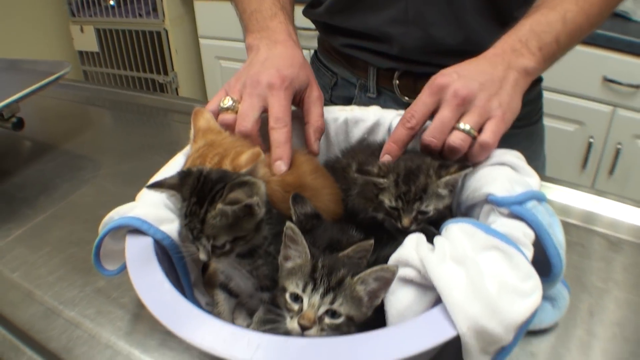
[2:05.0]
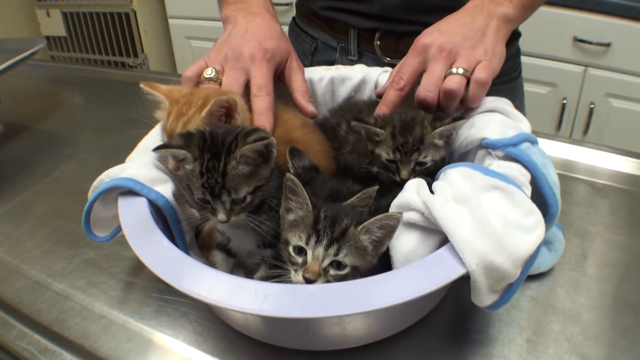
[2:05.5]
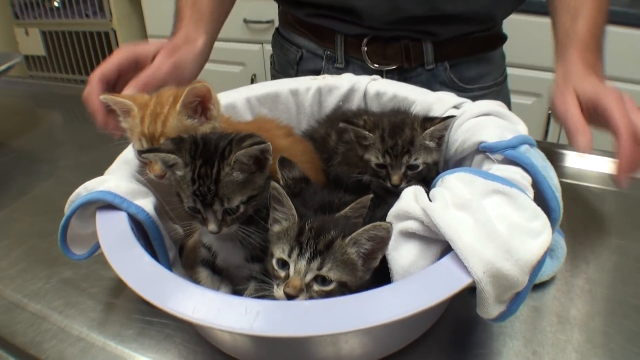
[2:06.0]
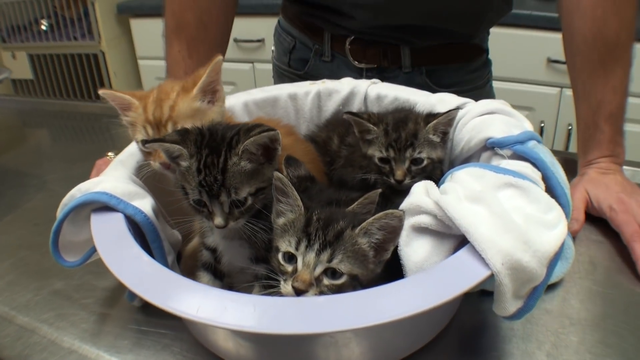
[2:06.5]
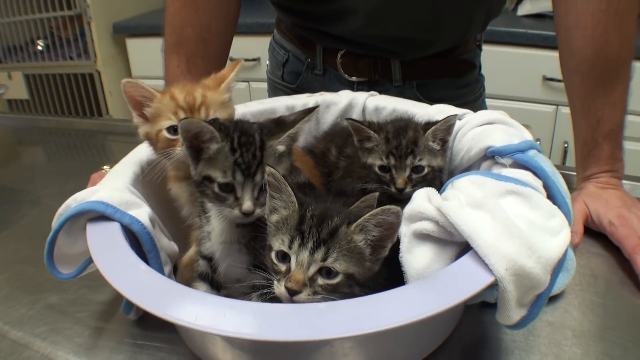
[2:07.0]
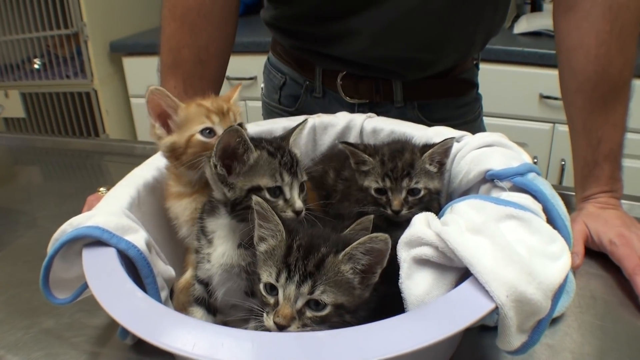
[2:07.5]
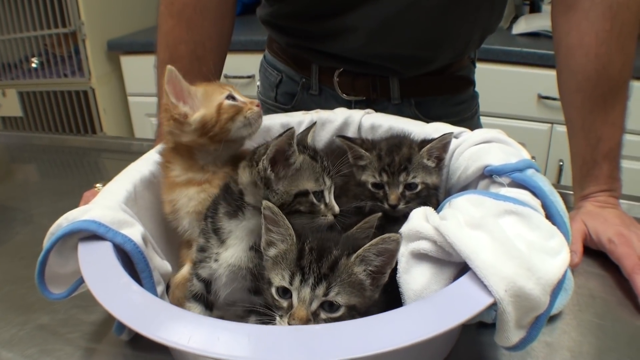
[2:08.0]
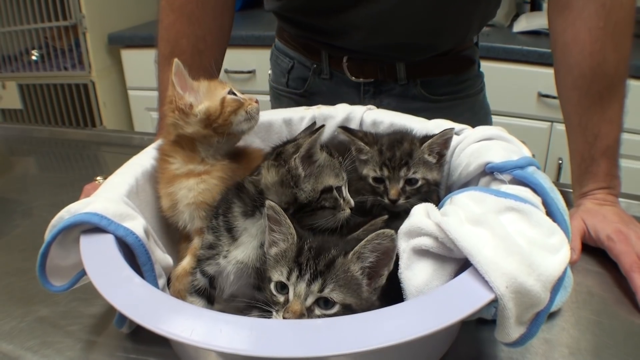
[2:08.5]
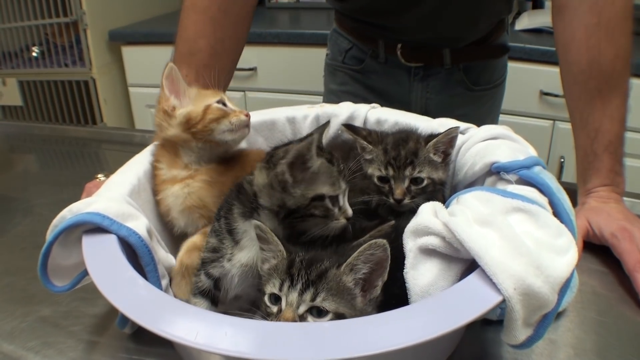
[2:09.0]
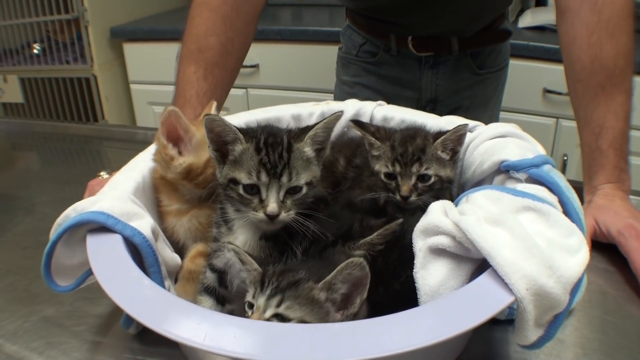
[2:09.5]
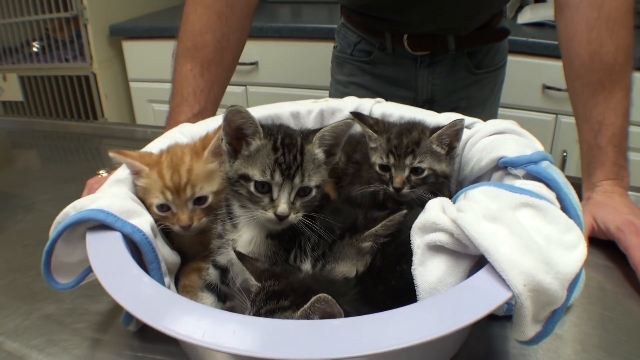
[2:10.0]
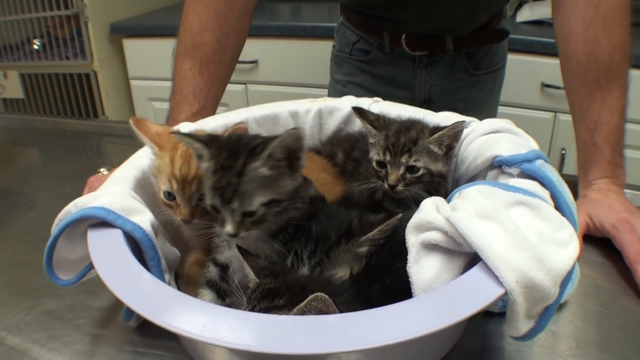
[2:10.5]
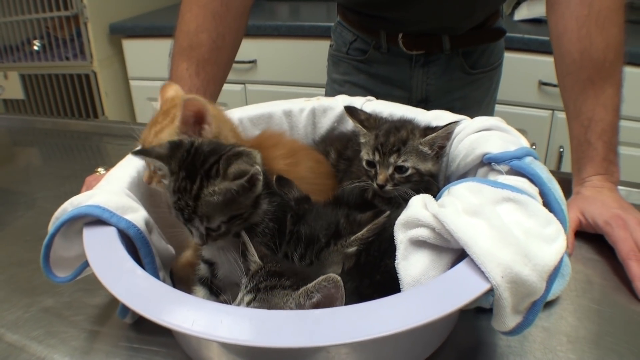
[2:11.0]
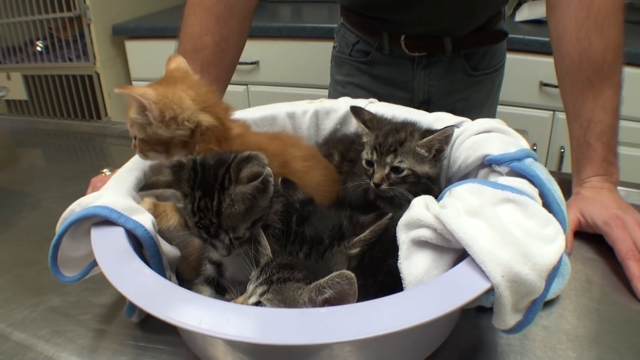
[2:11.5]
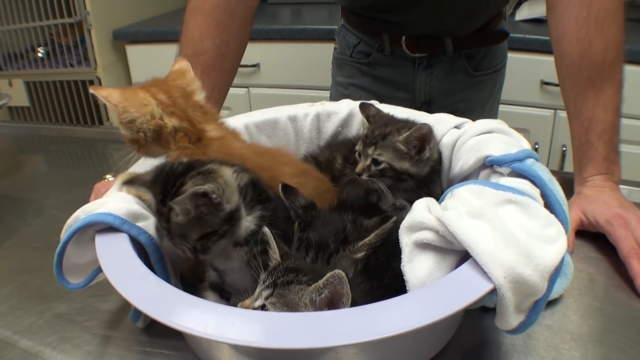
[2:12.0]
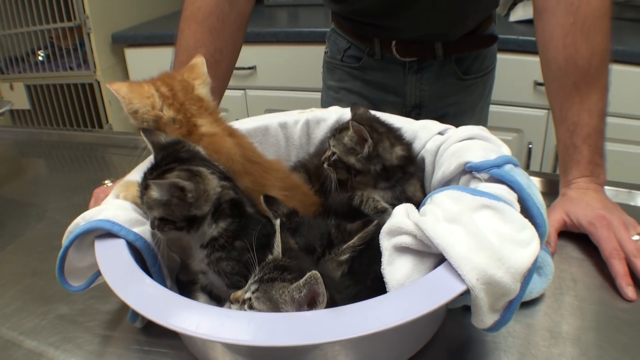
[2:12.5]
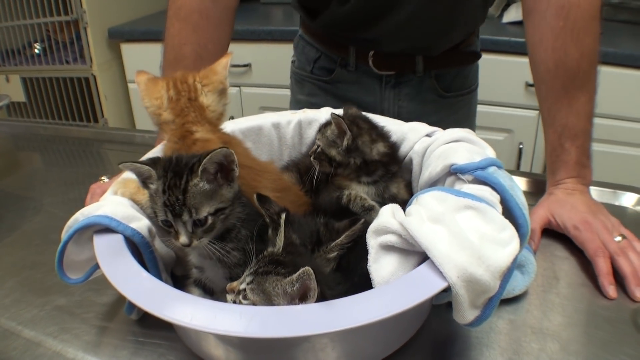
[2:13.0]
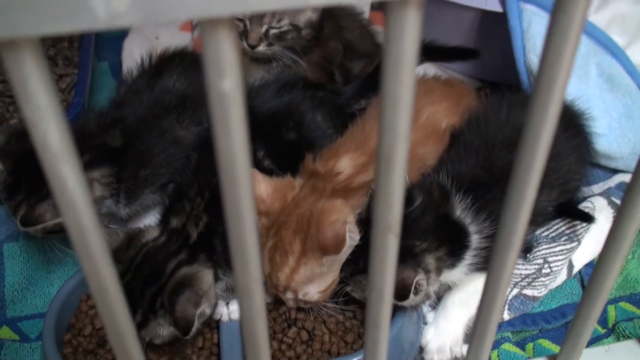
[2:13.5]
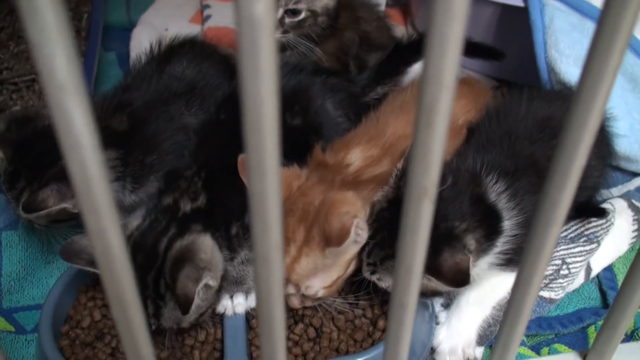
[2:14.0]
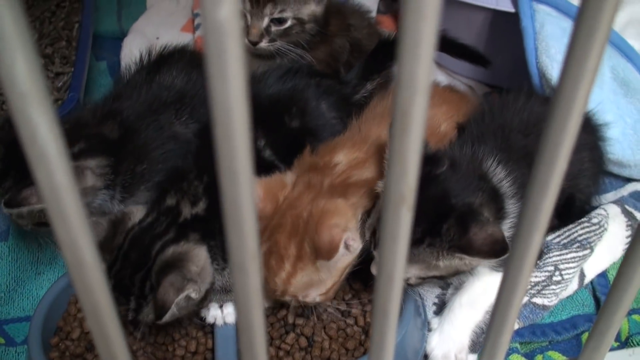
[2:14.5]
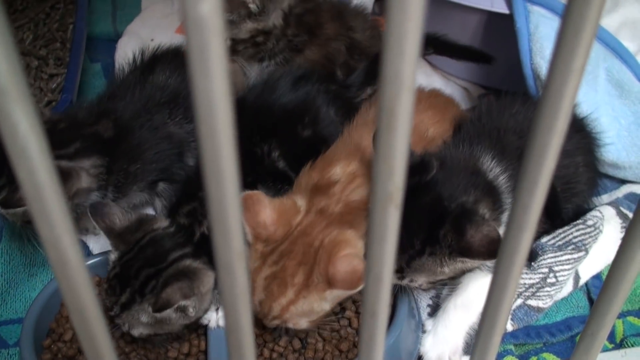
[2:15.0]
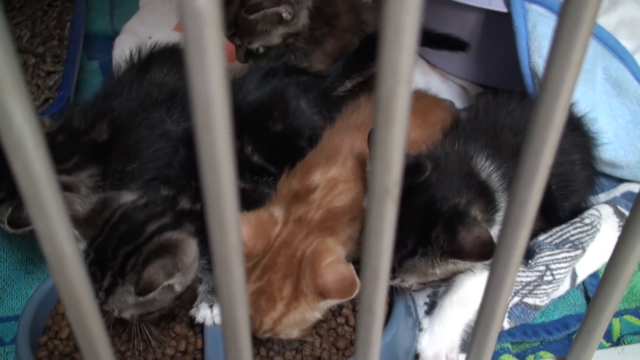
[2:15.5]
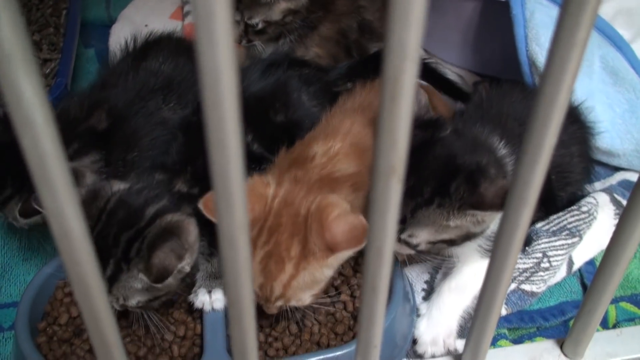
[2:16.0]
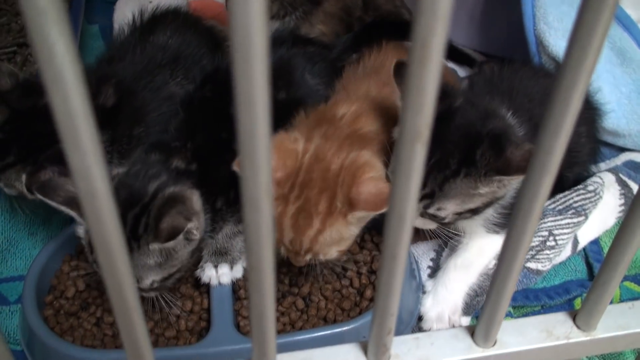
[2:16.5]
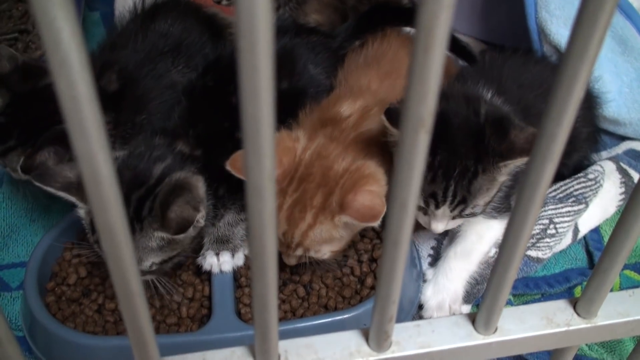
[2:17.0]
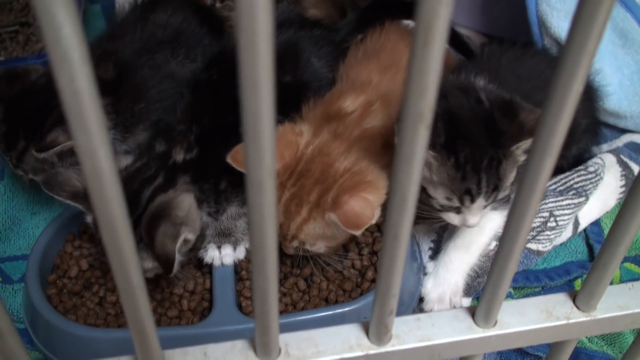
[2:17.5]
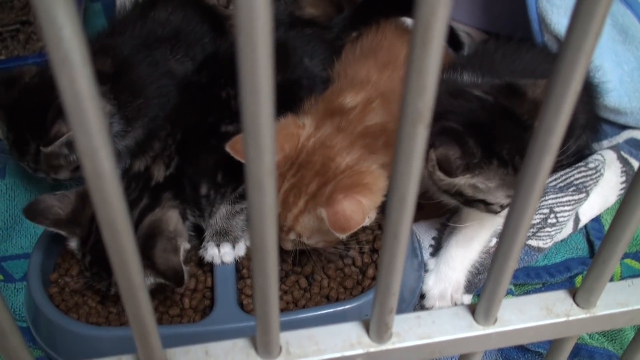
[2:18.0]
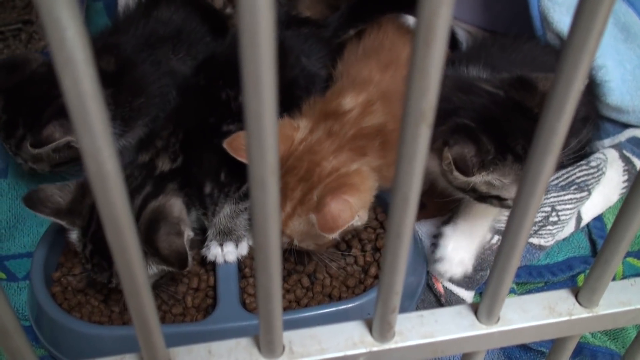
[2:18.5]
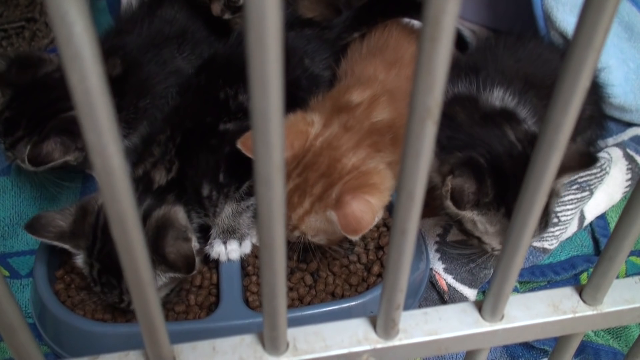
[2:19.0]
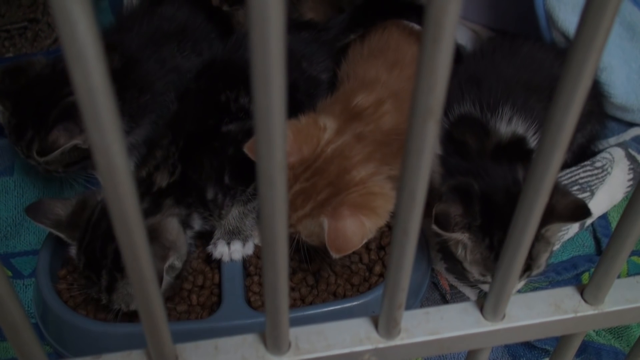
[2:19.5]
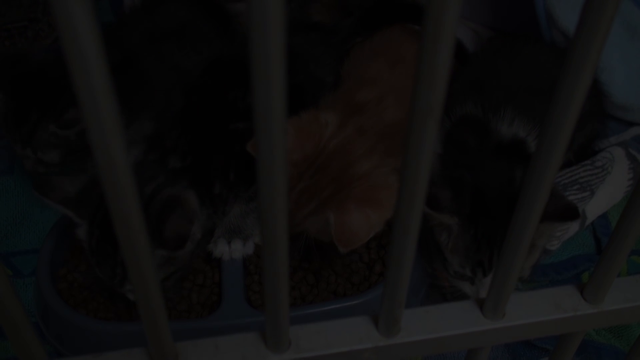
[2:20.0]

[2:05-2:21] Some of the kittens are still sitting in the carrier, and the guy gives them medicine from the syringe; they look kind of tired. One kitten has a little white face with black stripes coming down the sides of his face, and the little ginger kitten is there too. The kittens seem to be starting to wind down, and their ears point forward. At the wash station, a kitten stands over the grate where they are washed. Another girl, one of the dryers, joins them with a pink towel, and they are all getting dried off.